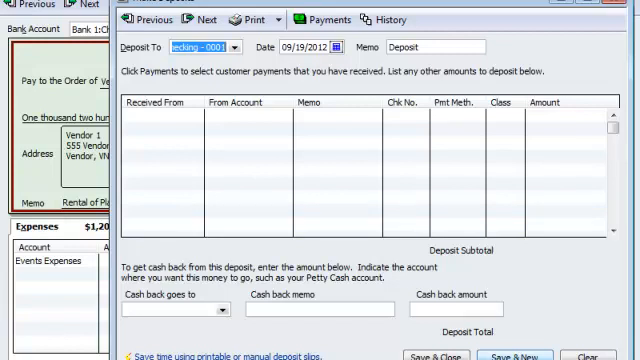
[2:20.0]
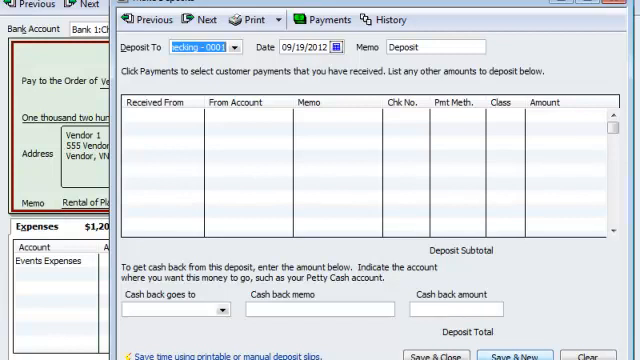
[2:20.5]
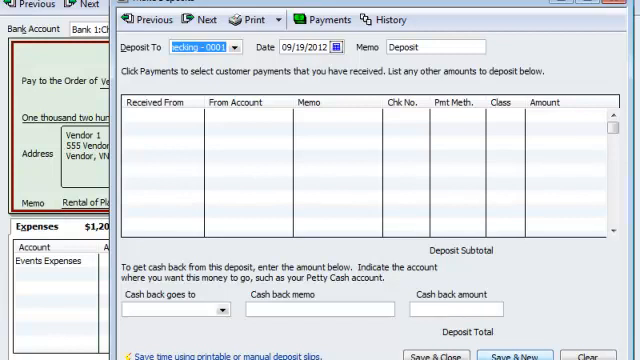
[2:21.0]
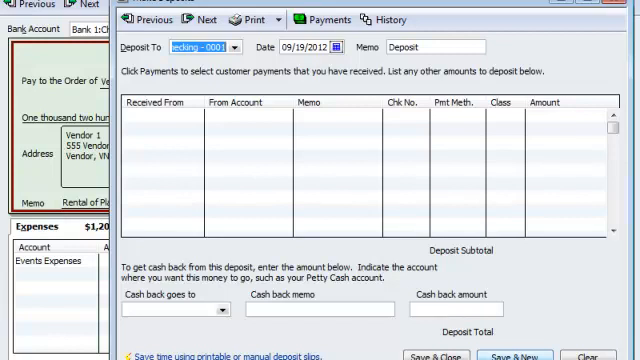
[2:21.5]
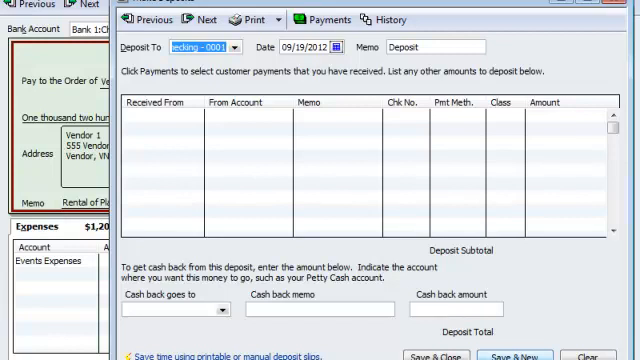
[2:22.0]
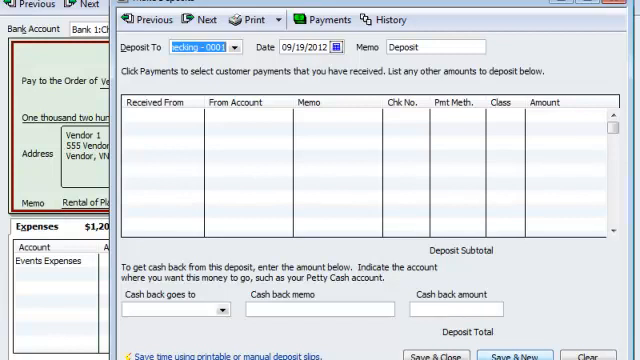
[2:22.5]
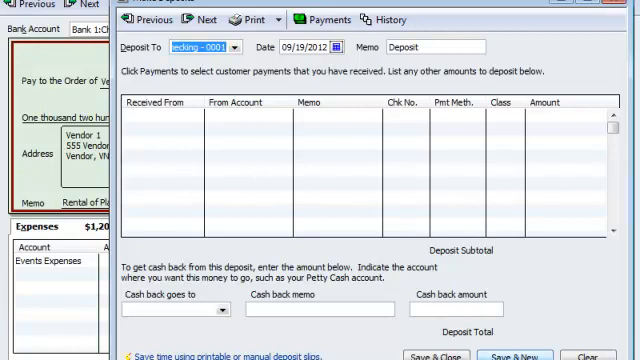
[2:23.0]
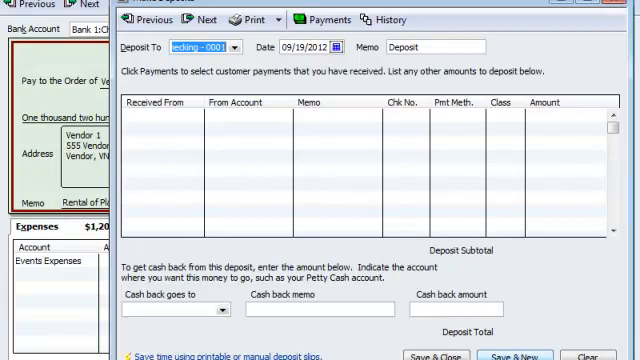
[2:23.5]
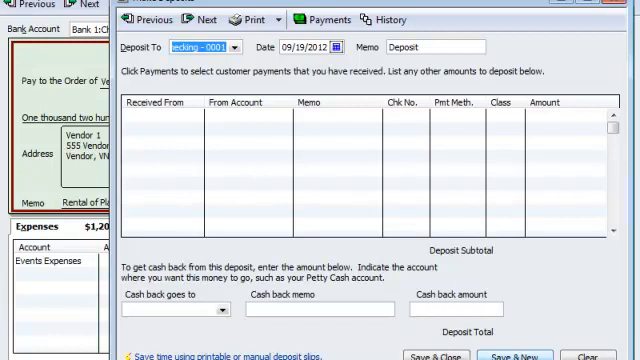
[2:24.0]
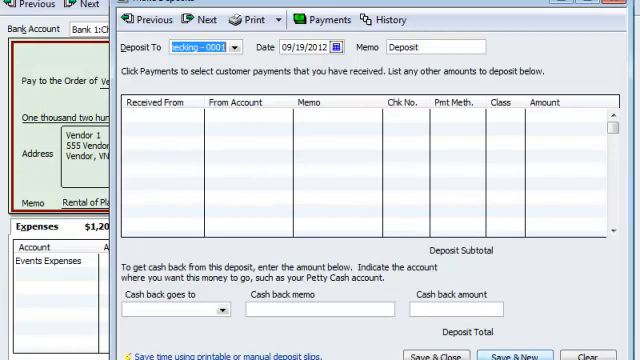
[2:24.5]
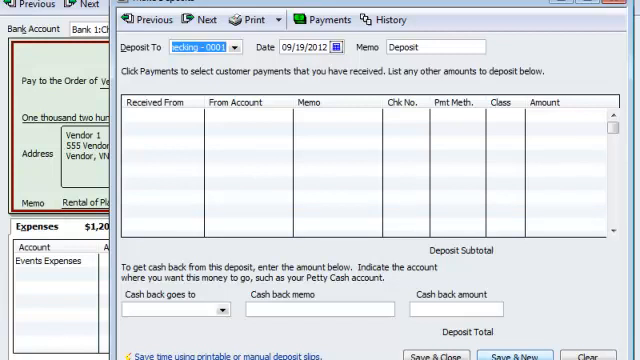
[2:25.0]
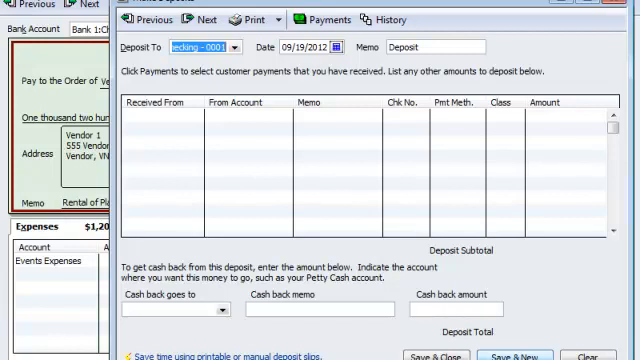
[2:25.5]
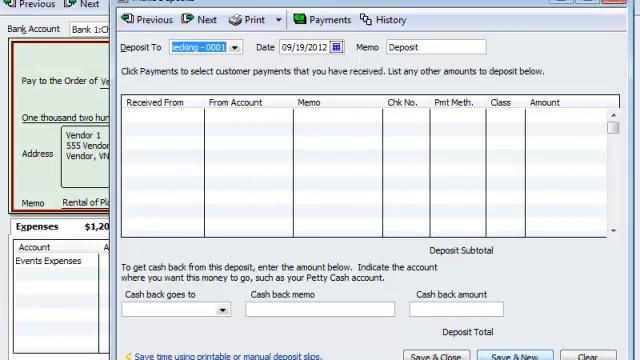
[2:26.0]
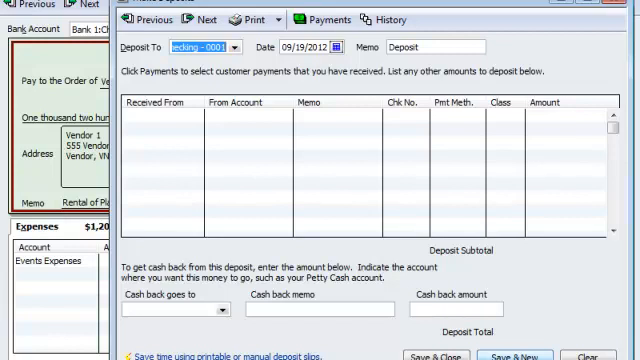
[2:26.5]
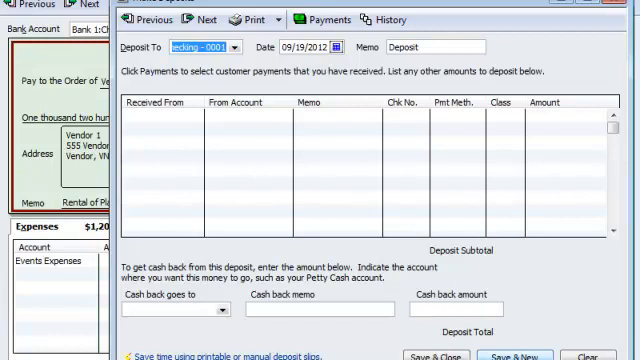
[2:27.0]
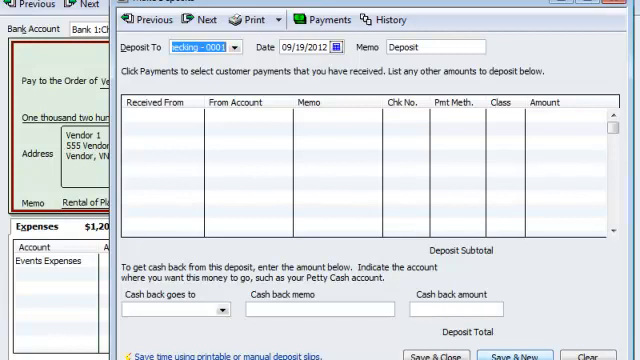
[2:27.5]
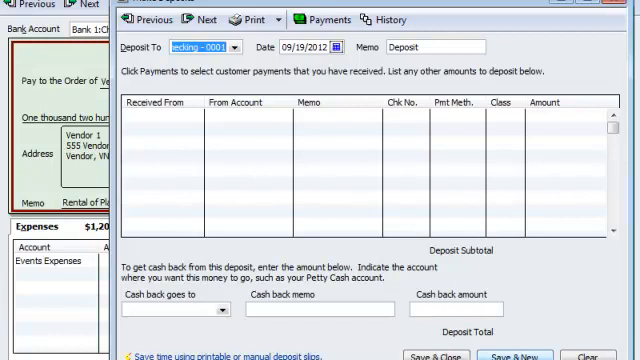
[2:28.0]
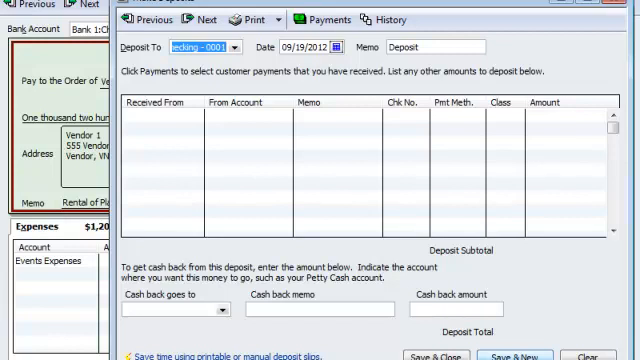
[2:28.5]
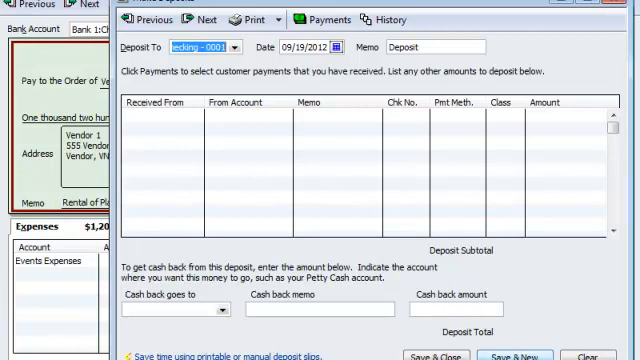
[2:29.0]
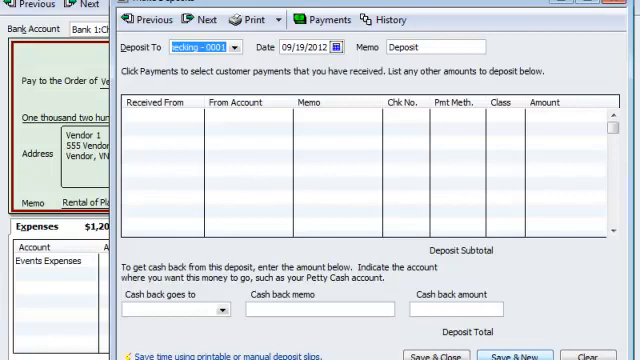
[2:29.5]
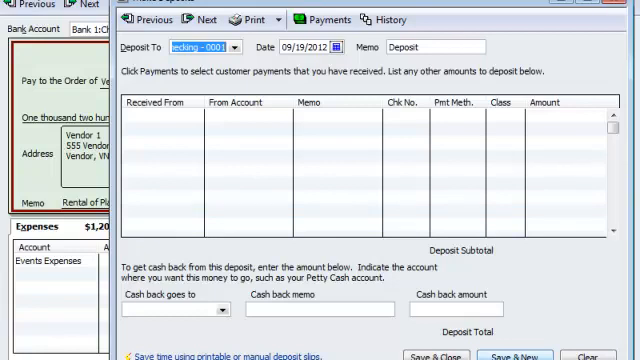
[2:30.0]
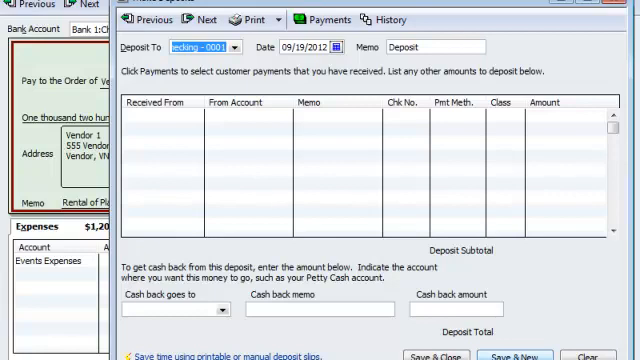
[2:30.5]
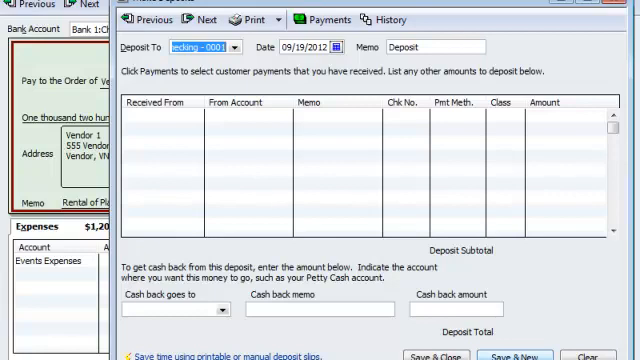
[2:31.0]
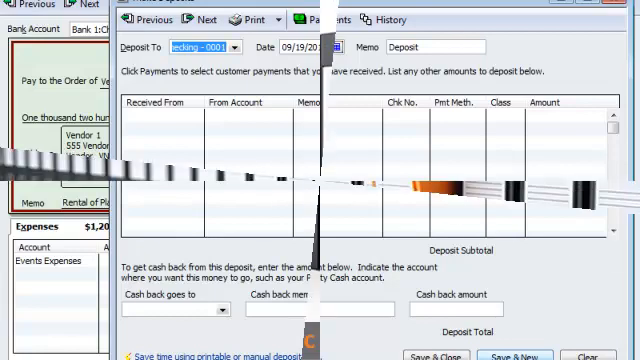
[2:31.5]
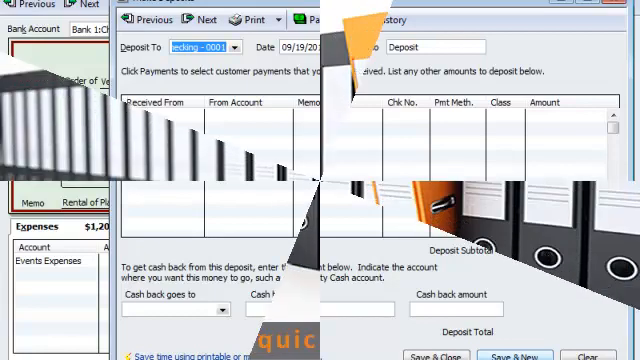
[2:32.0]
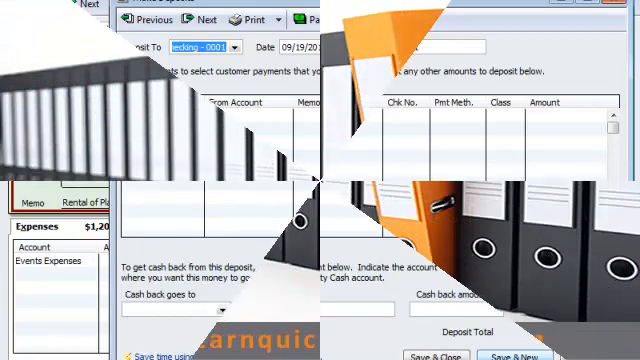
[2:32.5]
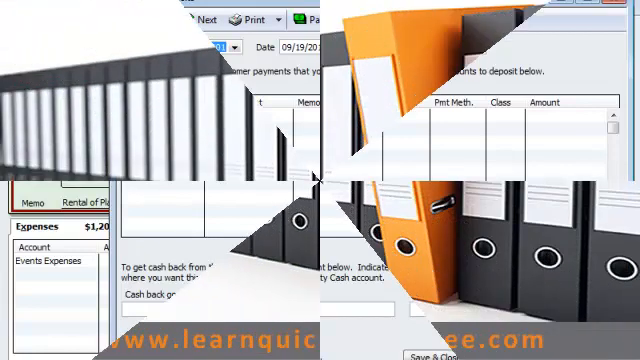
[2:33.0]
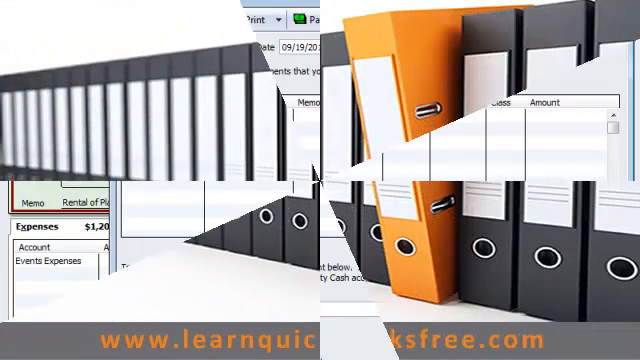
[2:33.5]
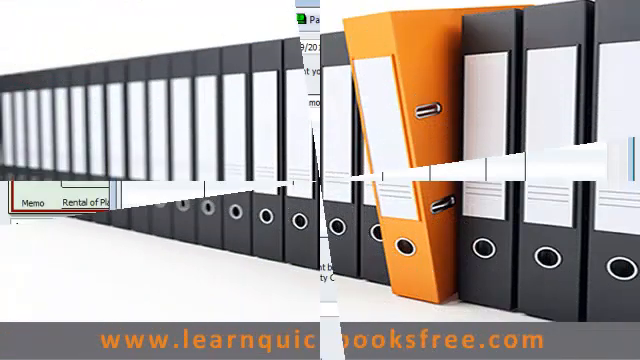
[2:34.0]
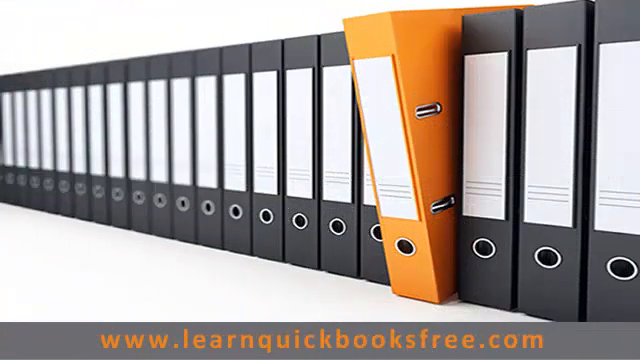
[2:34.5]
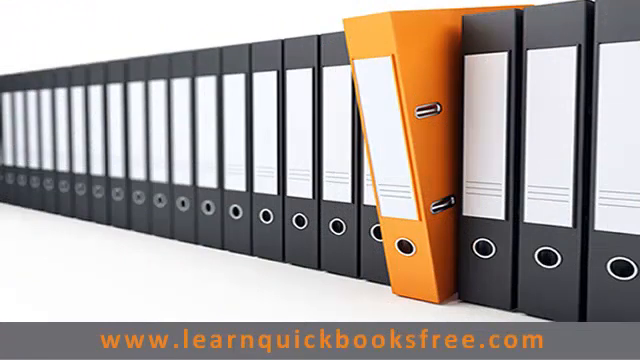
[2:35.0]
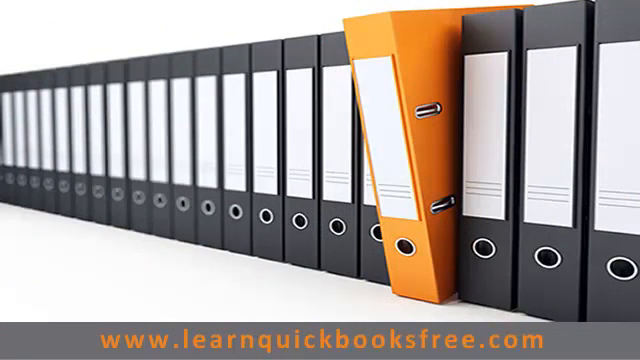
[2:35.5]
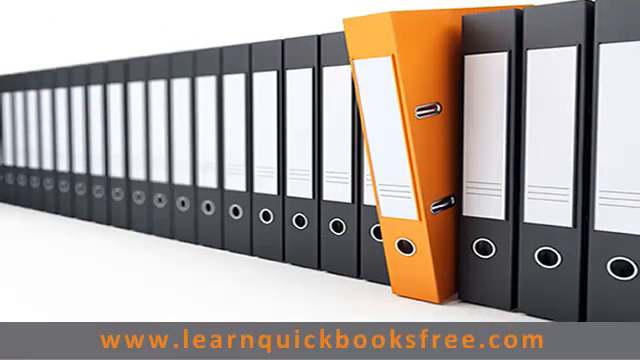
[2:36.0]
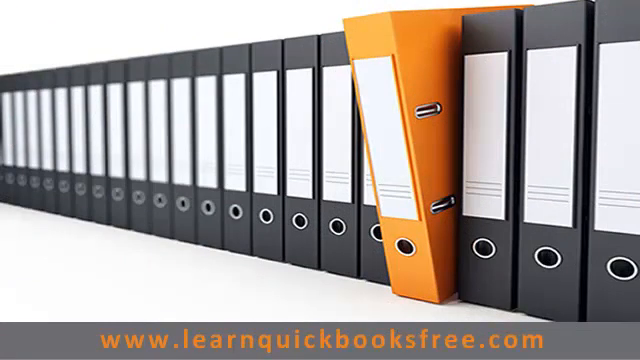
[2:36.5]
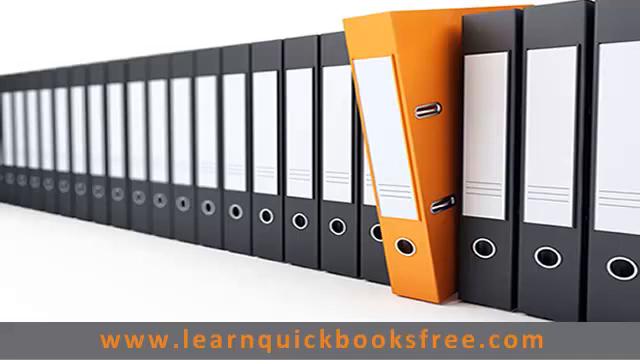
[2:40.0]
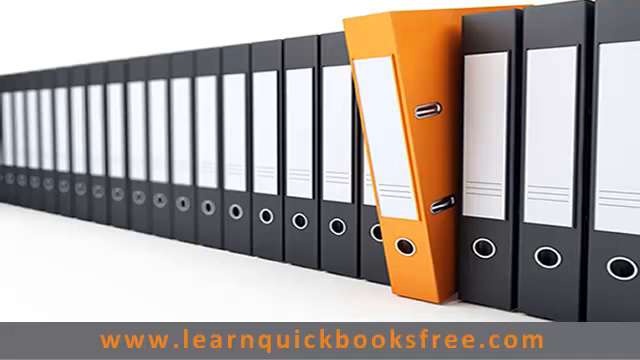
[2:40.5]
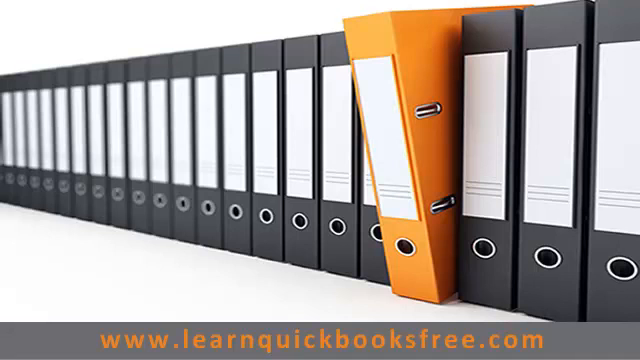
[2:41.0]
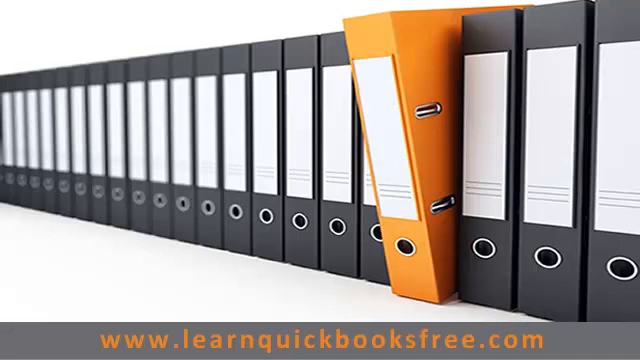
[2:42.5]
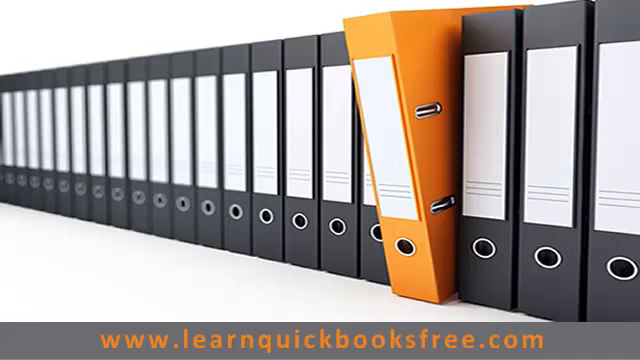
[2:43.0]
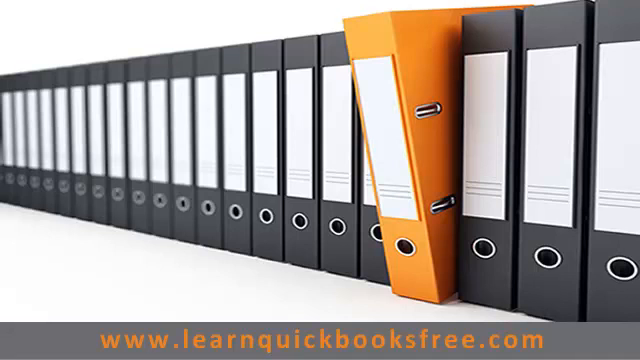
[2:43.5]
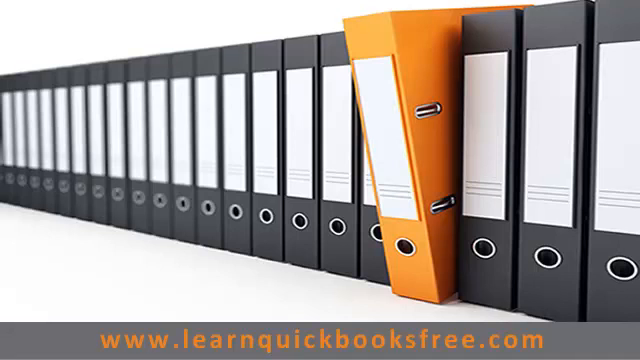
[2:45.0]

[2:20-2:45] The New Deposit tab is still open but contains no new information, apparently because the deposit has already been saved. The video then transitions to an image of many files side by side, mostly black with one orange file. A URL at the bottom of the screen reads "www.learnquickbooksfree.com" in orange letters.